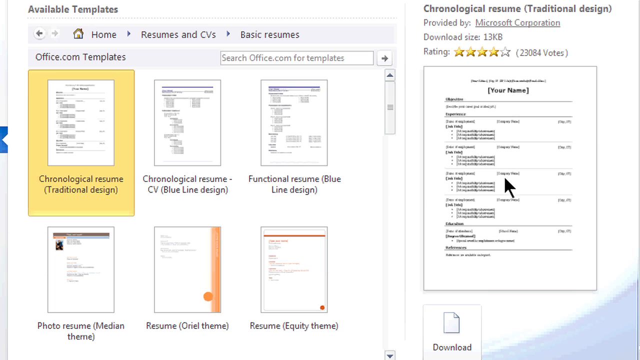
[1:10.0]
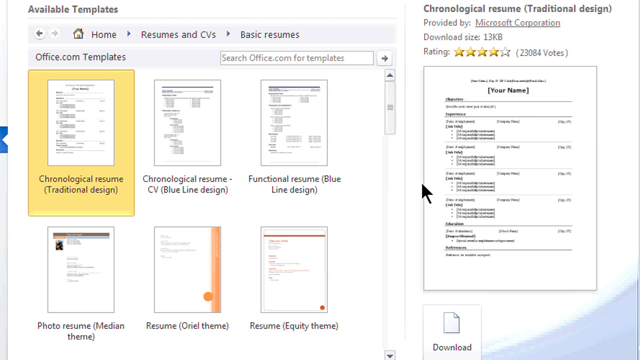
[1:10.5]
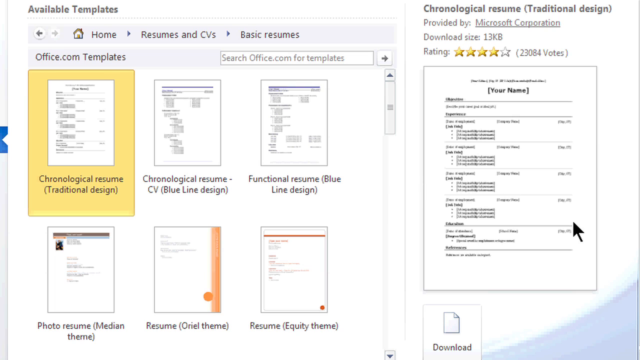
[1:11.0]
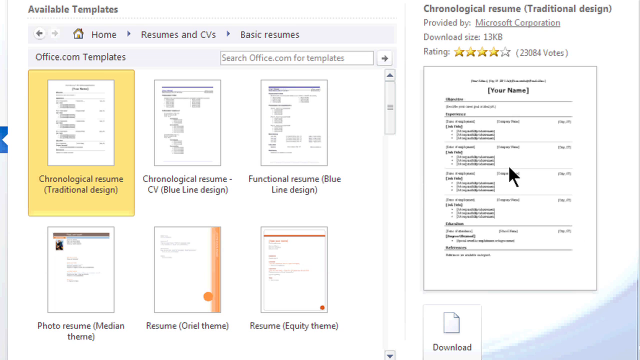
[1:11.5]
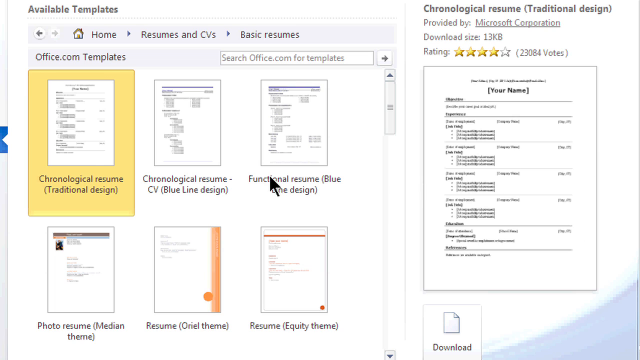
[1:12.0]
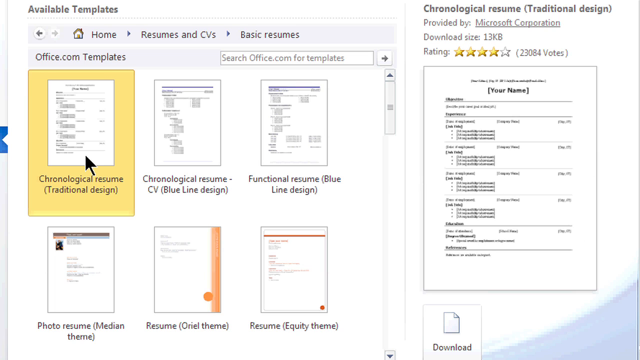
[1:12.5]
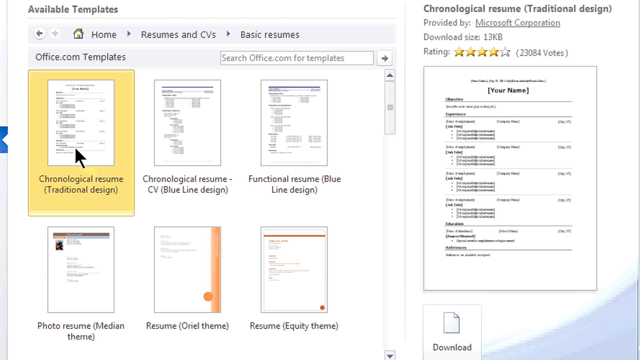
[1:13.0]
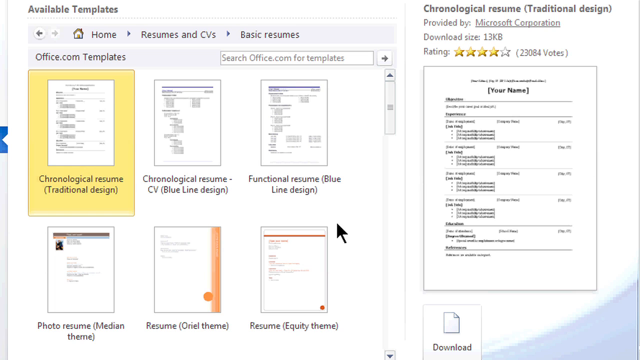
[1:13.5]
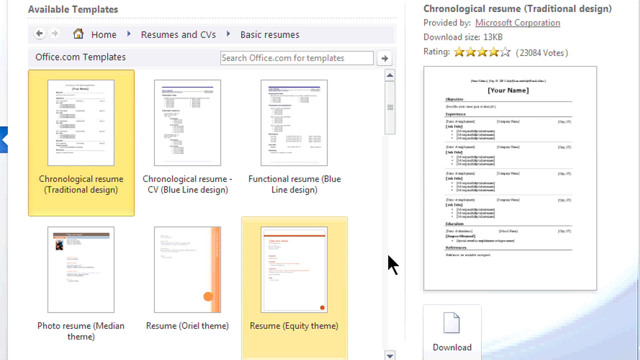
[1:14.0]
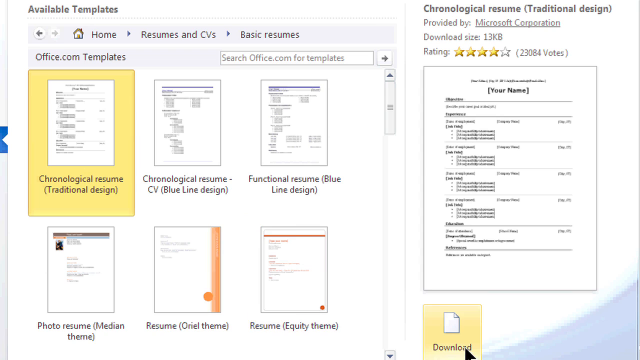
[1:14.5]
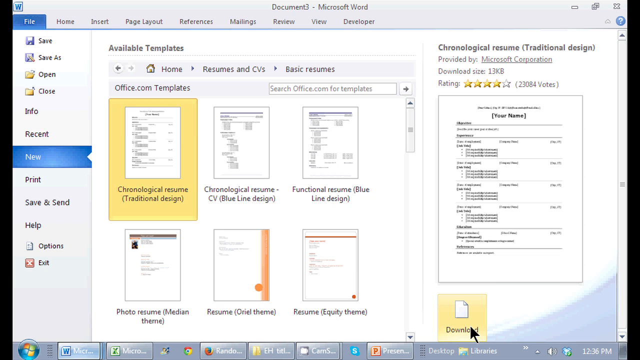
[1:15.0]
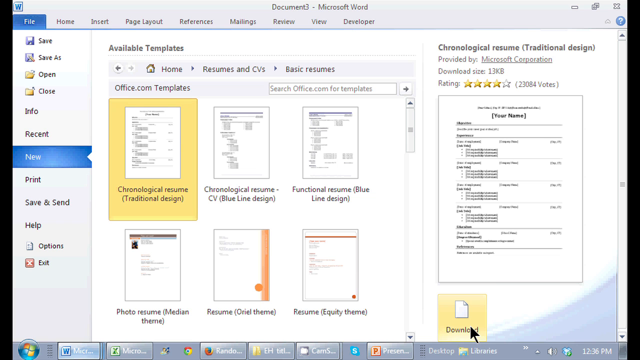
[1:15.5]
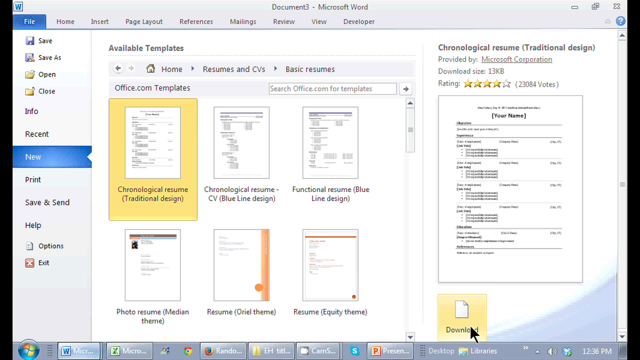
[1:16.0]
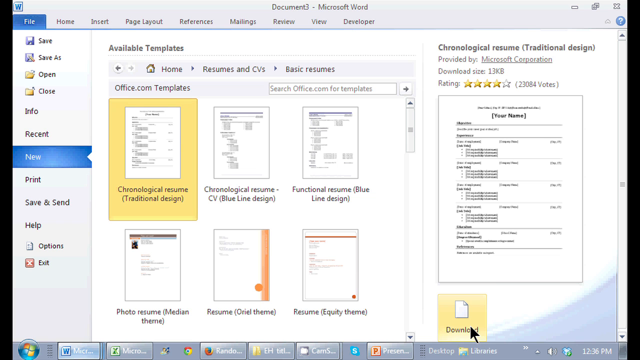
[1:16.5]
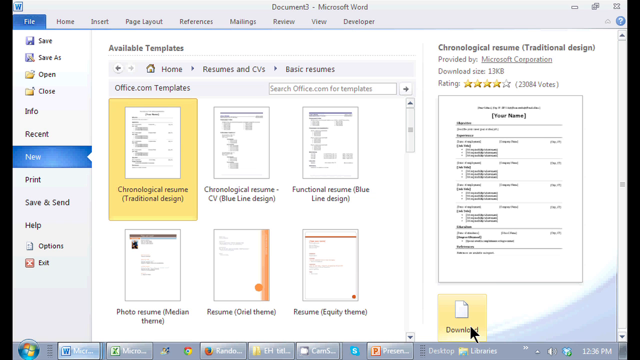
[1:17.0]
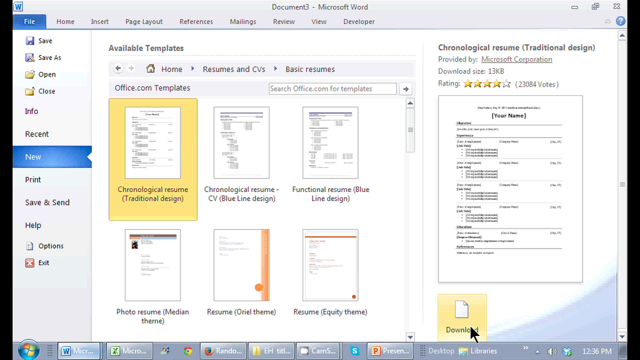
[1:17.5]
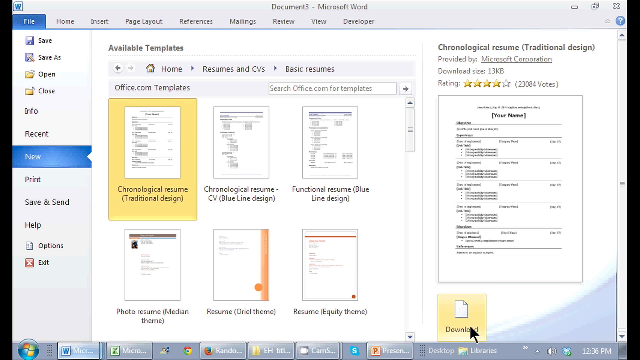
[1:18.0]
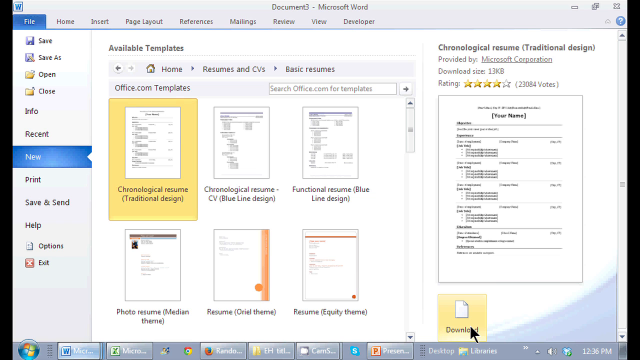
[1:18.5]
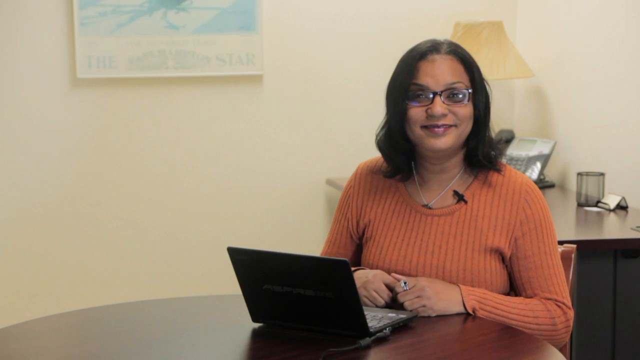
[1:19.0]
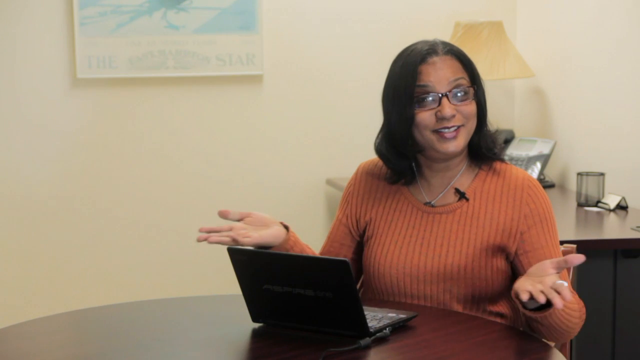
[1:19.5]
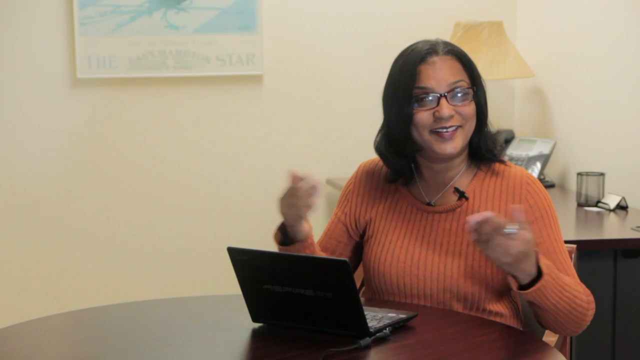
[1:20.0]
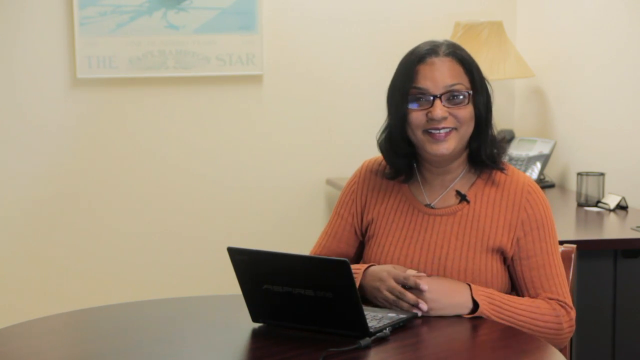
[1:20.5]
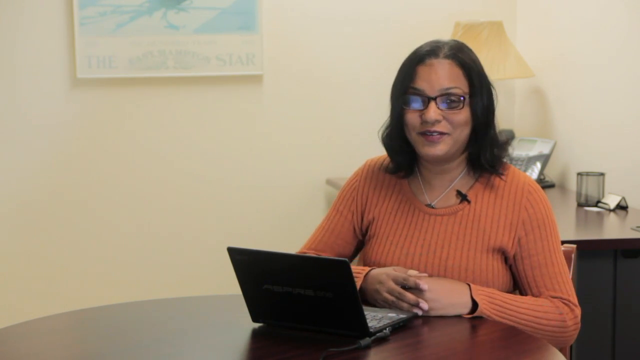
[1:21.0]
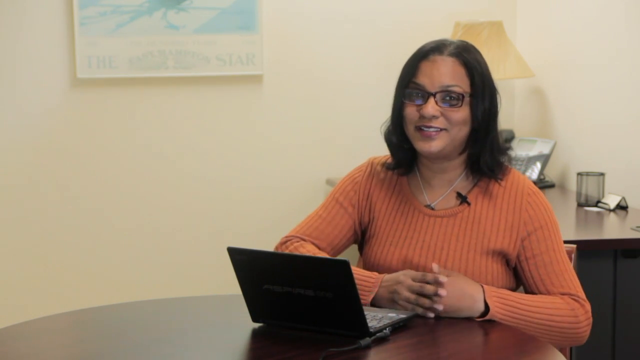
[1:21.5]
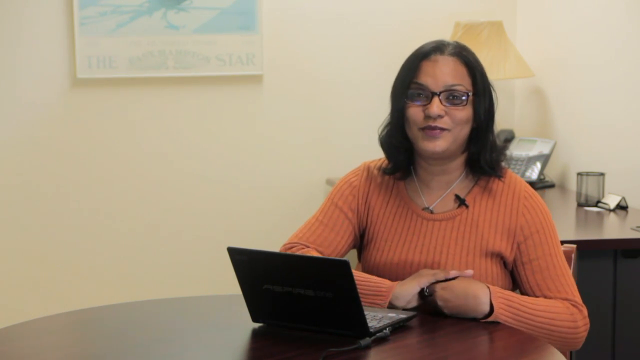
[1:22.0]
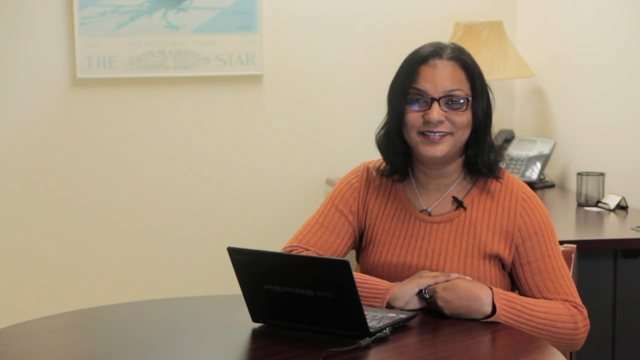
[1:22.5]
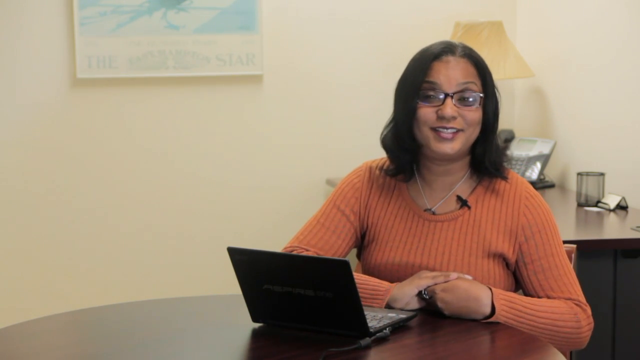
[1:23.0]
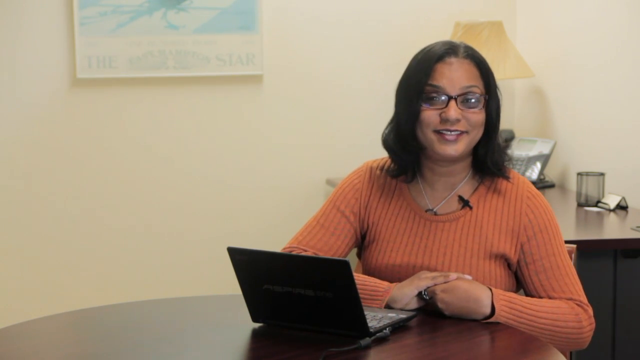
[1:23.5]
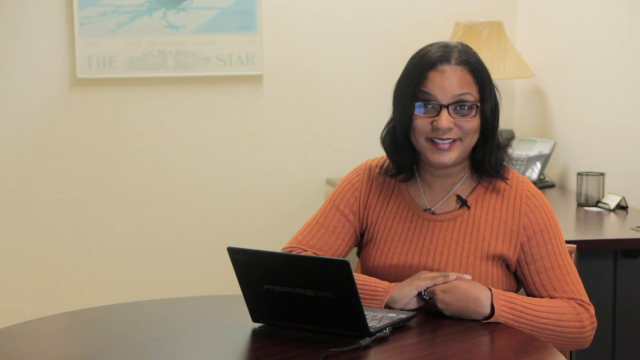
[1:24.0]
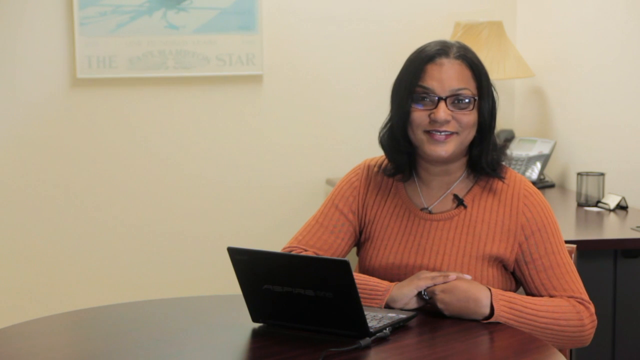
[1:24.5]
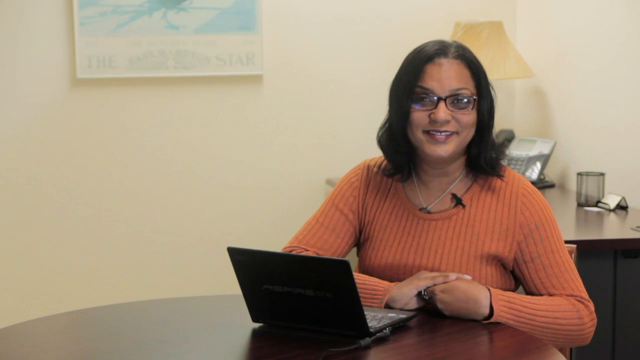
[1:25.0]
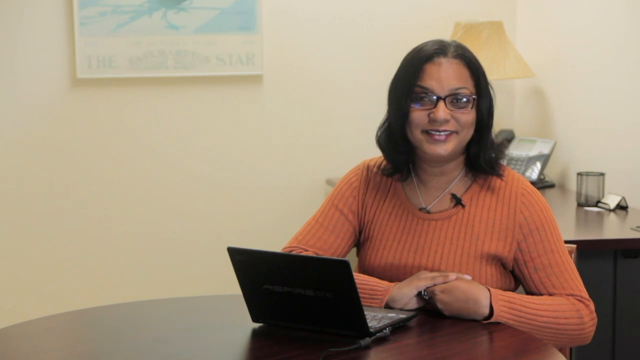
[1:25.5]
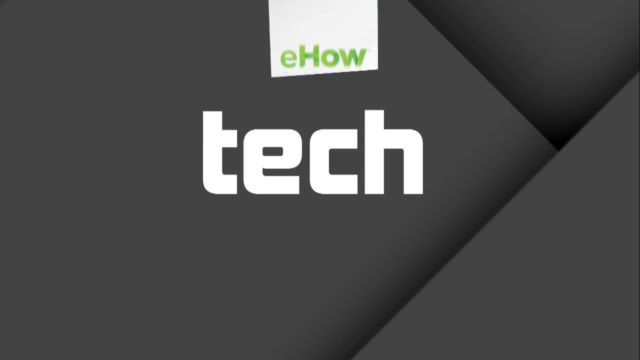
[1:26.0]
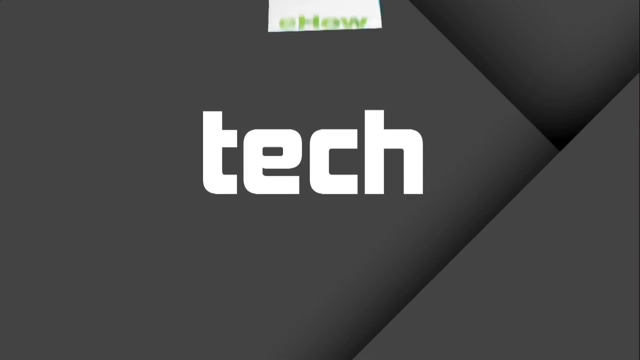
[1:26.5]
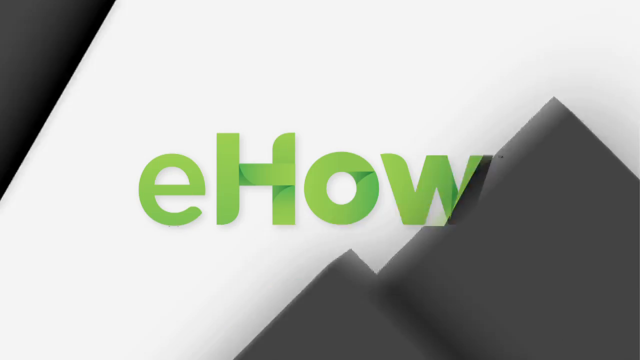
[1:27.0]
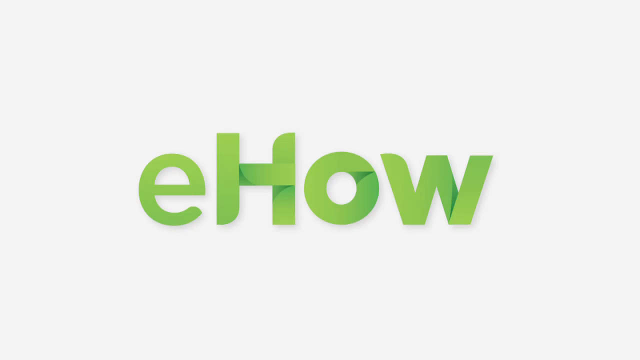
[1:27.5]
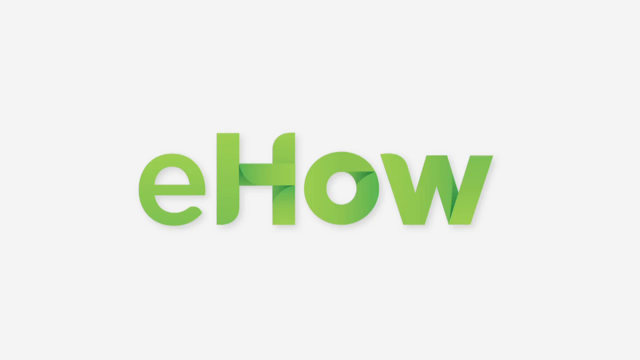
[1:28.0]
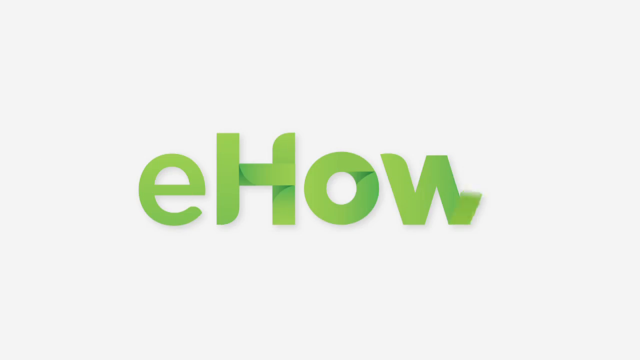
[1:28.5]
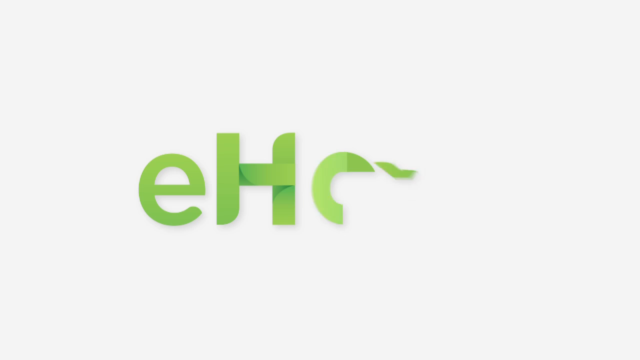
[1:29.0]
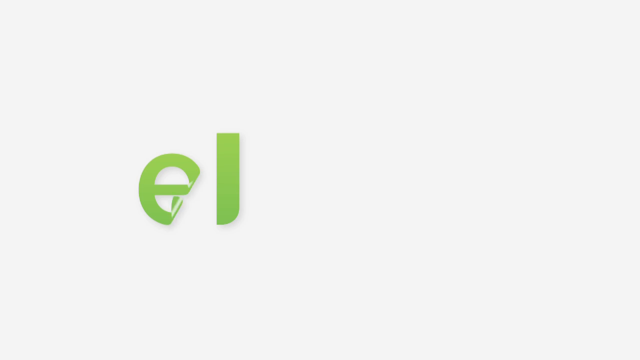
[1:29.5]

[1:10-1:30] The name of her office as a trainer, "how teach", is shown. She opens a new form editing page and scrolls down with the mouse. She goes to CV and "create a CV", showing how to create a CV, then goes to job application, then to a functional design section, apparently where the layout of the CV and the placement of a picture are designed. Then she is back on screen with a smiling face.